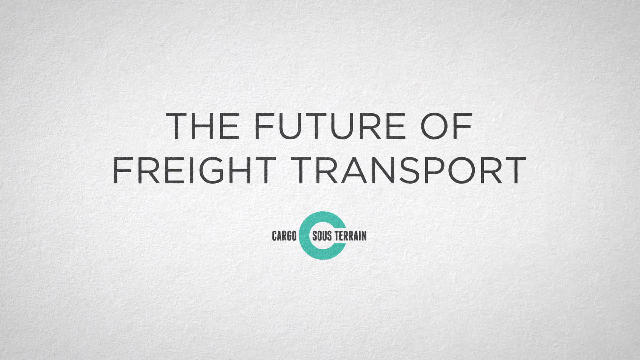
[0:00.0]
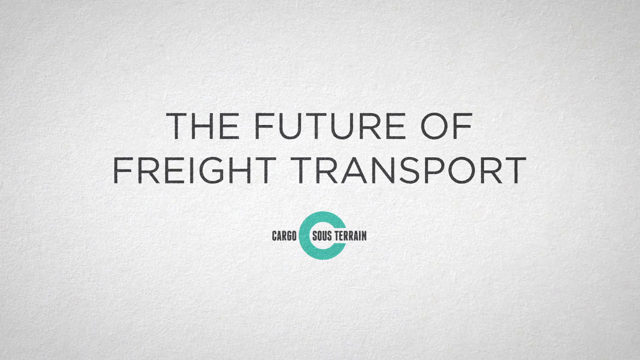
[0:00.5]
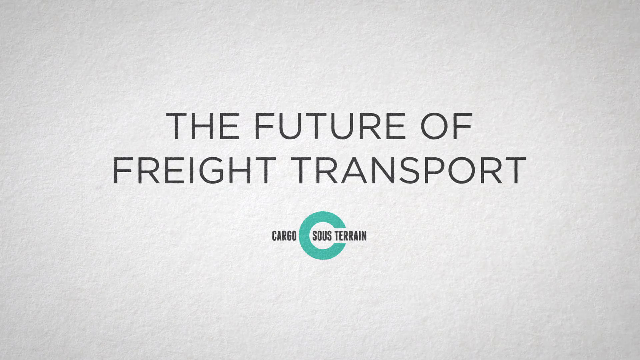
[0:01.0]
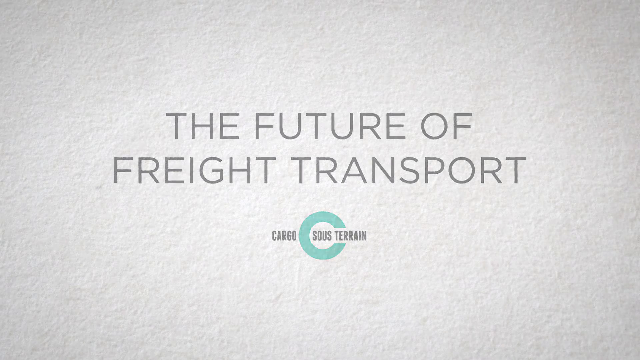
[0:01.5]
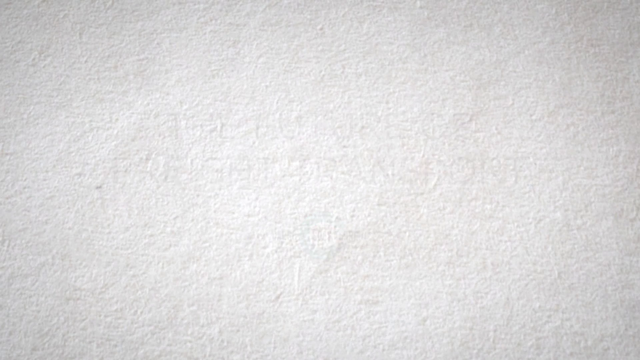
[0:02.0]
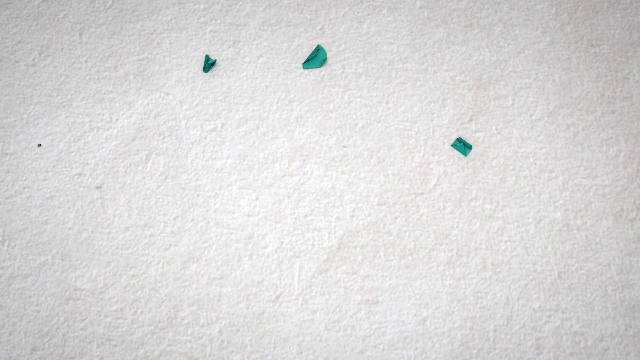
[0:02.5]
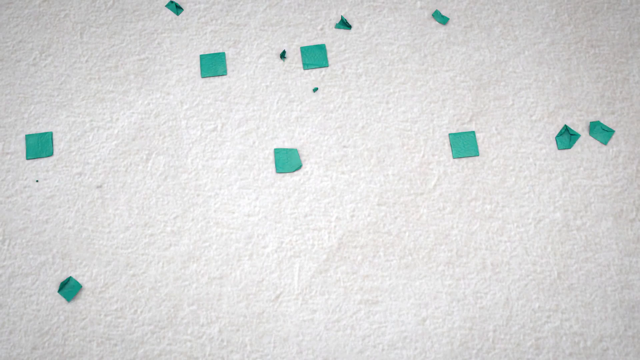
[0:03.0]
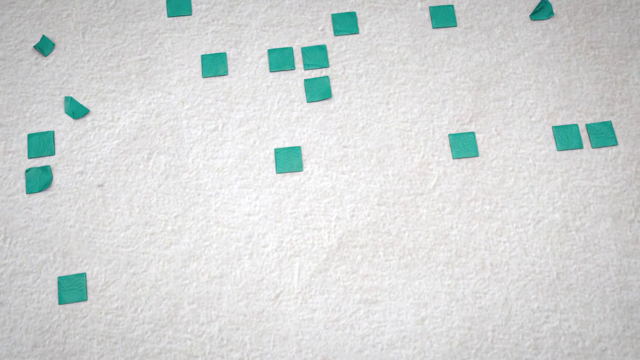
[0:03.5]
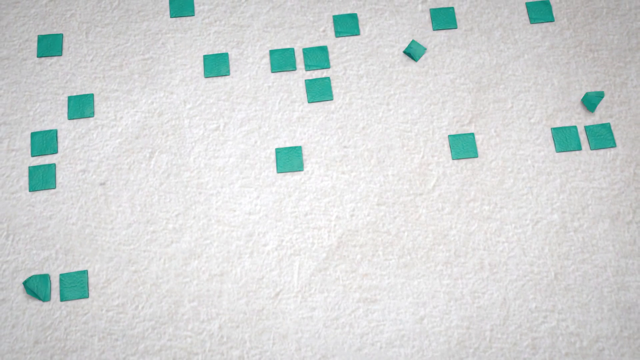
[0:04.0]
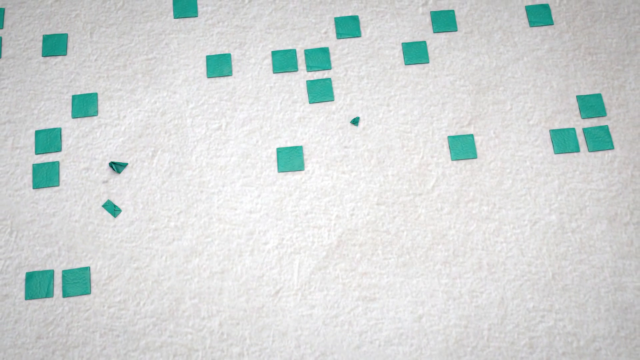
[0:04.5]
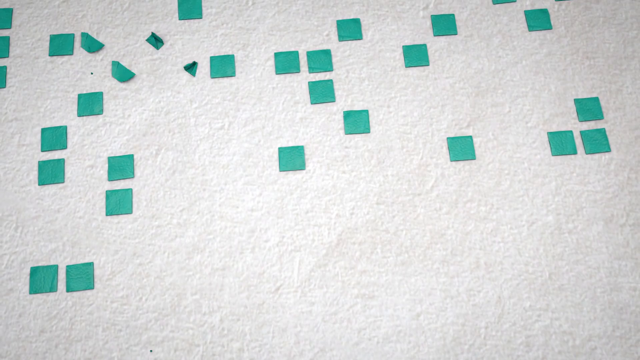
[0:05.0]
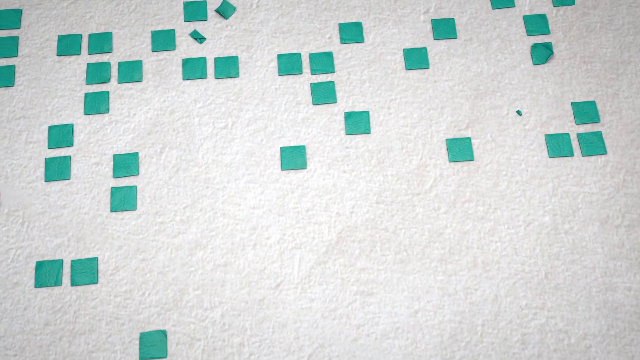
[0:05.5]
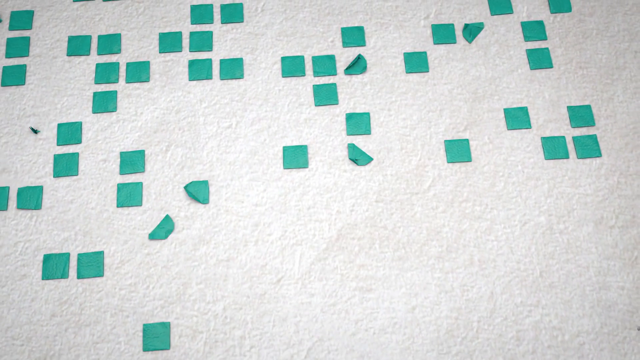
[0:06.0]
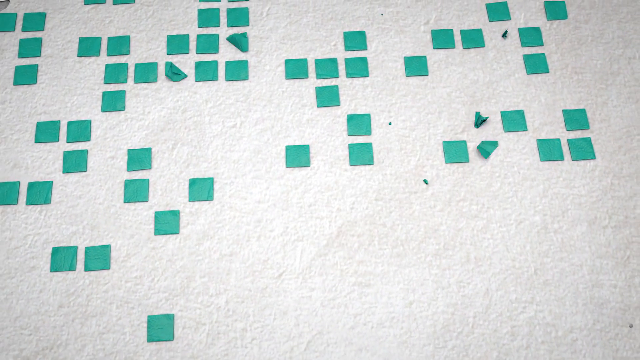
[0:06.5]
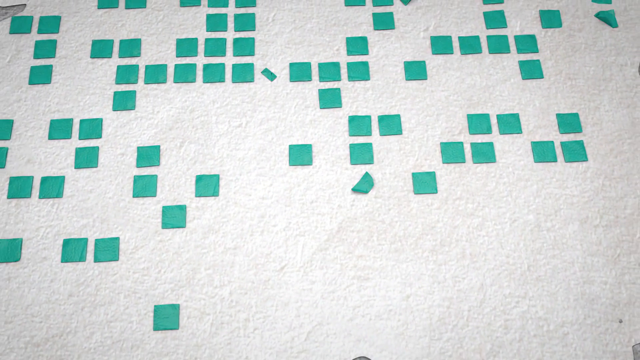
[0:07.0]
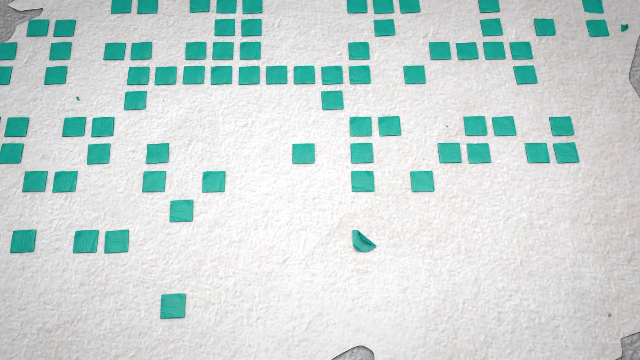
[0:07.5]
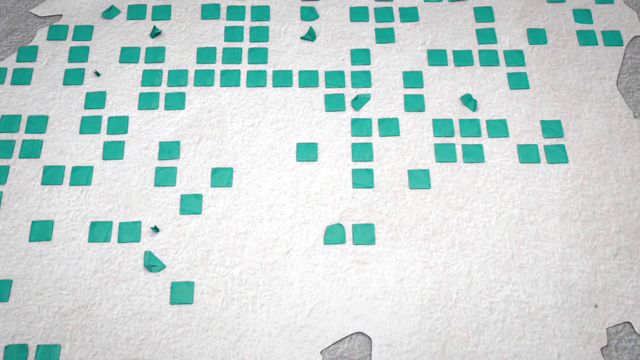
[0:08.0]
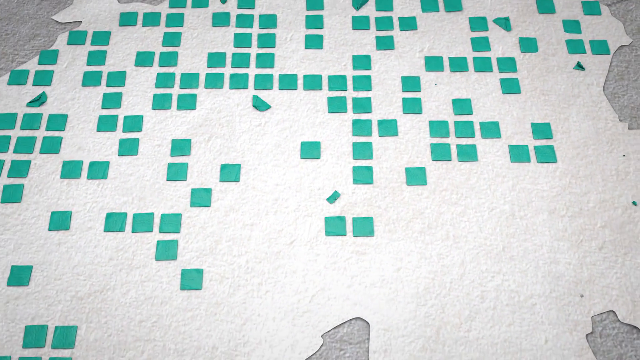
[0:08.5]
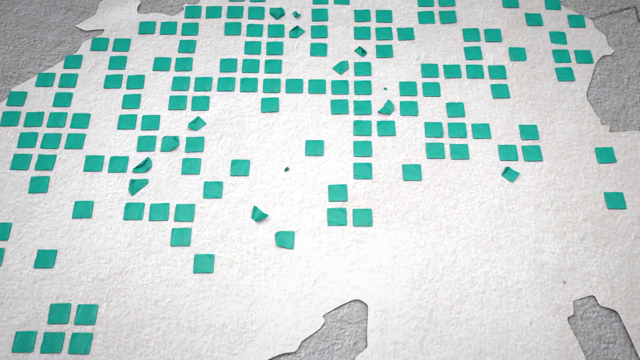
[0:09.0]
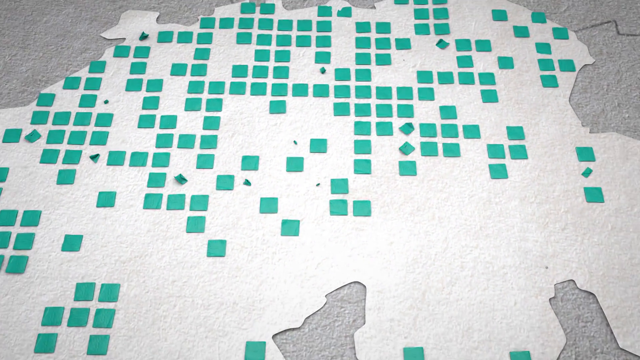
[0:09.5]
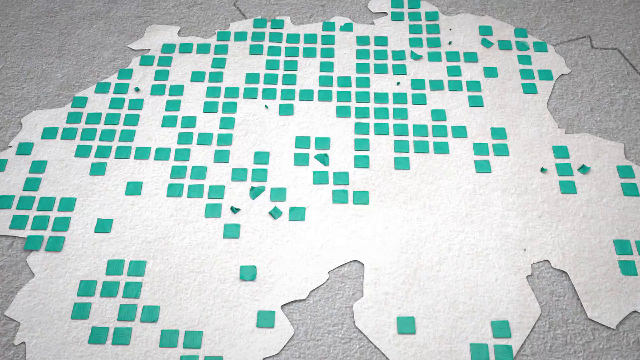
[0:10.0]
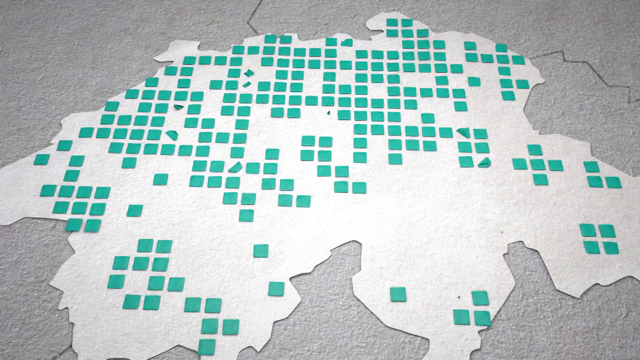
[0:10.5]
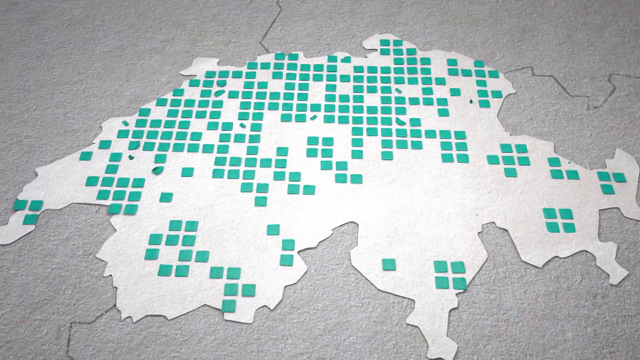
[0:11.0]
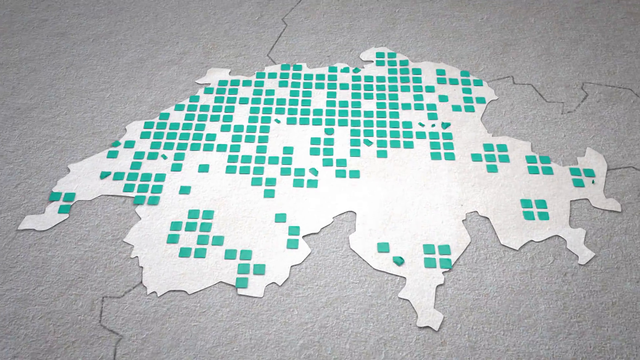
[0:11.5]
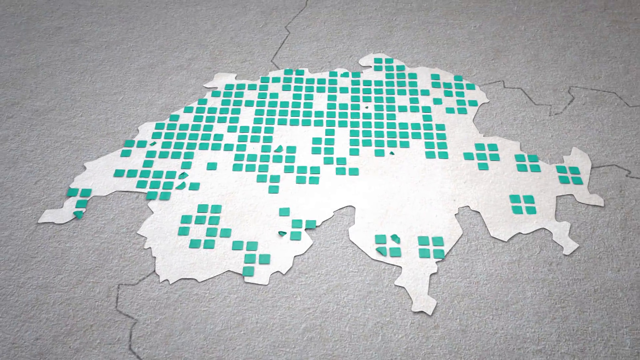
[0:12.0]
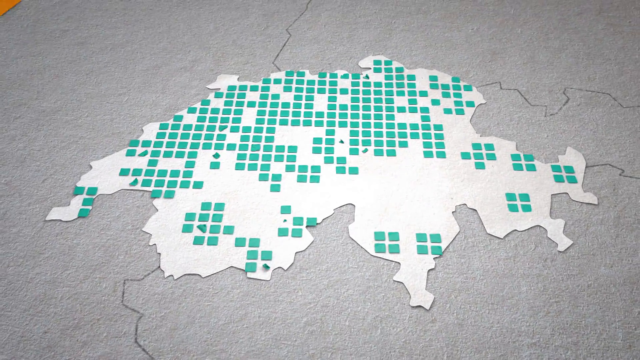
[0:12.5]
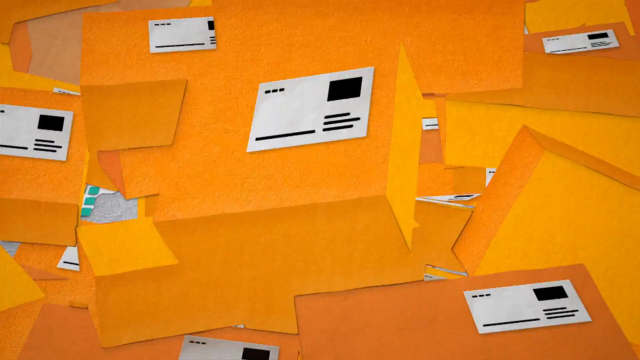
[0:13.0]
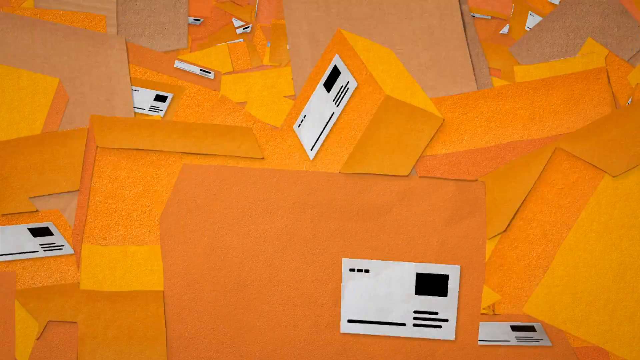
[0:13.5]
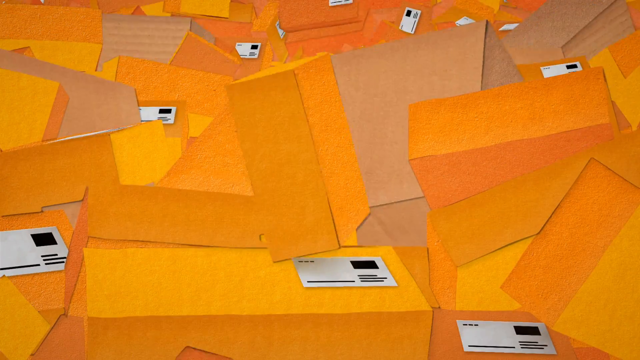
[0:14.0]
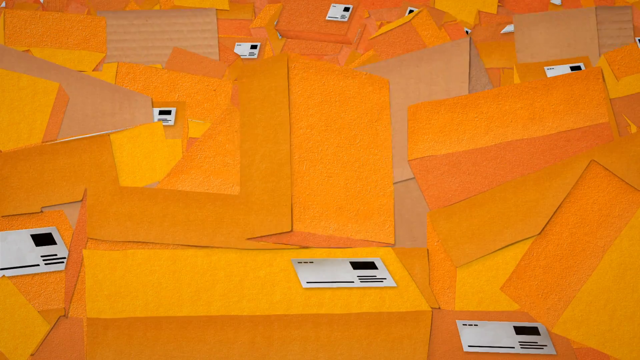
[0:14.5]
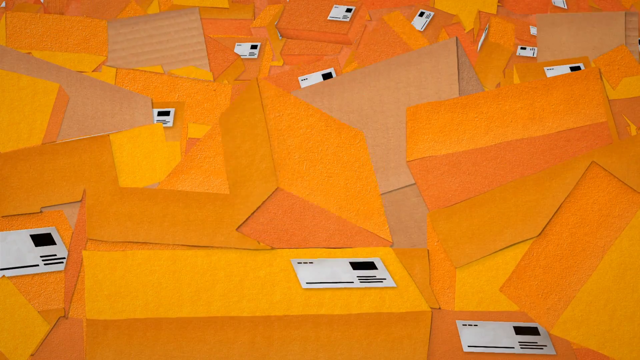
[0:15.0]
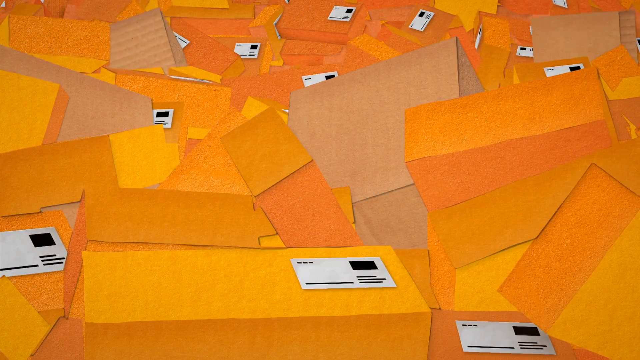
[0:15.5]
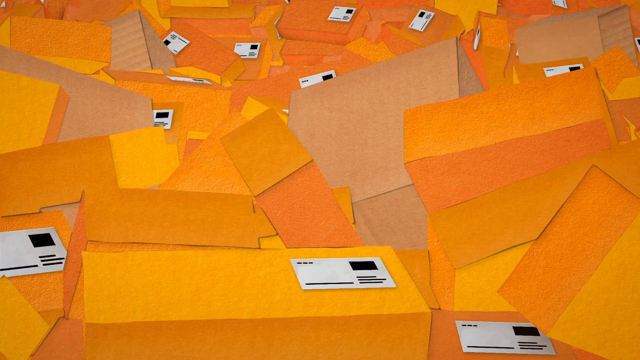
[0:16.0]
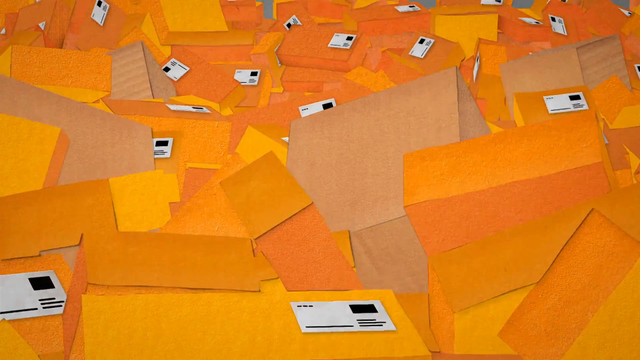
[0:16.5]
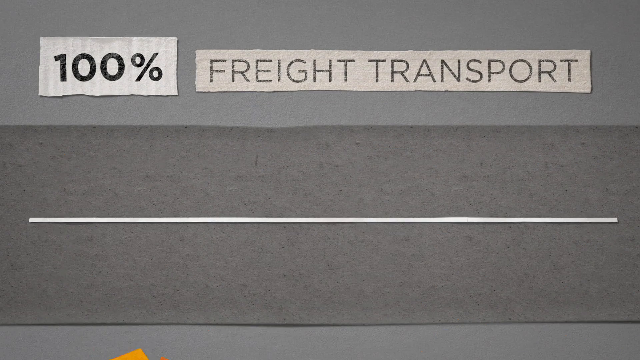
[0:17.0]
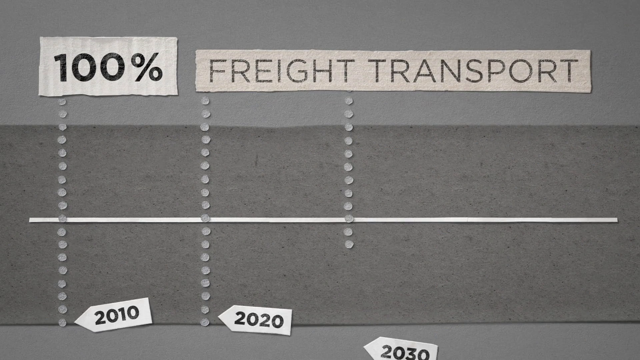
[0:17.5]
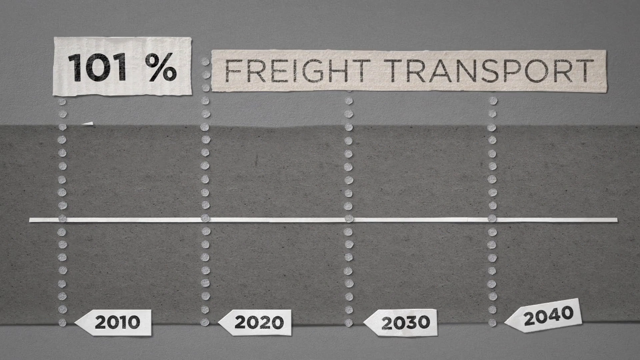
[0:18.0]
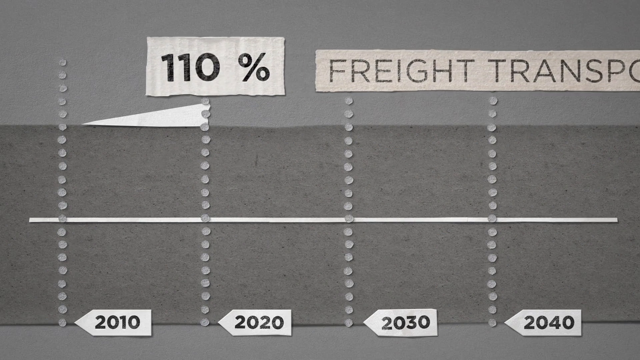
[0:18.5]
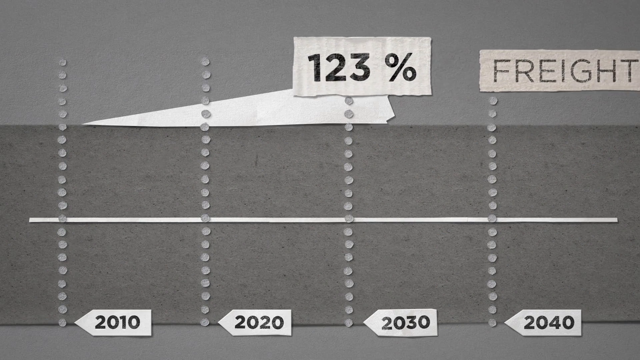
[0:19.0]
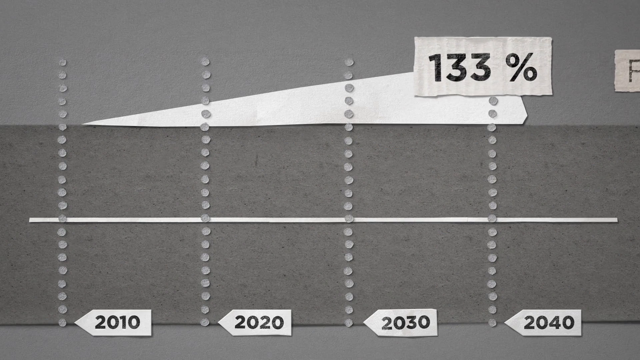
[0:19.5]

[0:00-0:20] The video opens on a white background with the text "the future of freight transport", and underneath it a logo that says "Cargo Suisse Terrain" with a big teal C going through the words. The background is textured, still white with some grayish attributes. The words fade and a bunch of teal post-it notes populate sporadically, in no apparent order, with gray textured blobs around the side as the camera zooms out. After the zoom-out finishes, a bunch of orange mail packages populate the screen, falling haphazardly from the top. They all have white labels with black boxes, likely representing text, and some brown envelopes or boxes are mixed in with the orange boxes; the boxes are also highlighted in some aspects. The scene then changes to a gray background that says "a hundred percent freight transport" and displays the years from 2010 to 2040 in decades, along with the percentage of growth over that time.